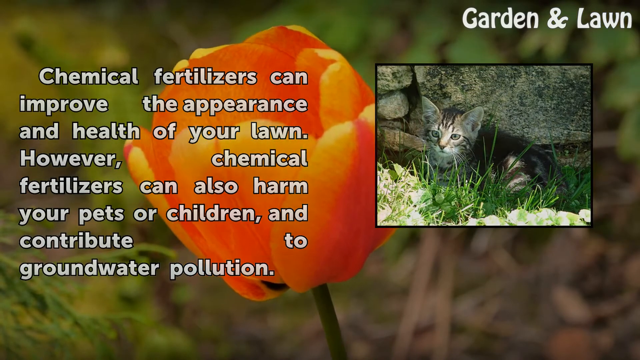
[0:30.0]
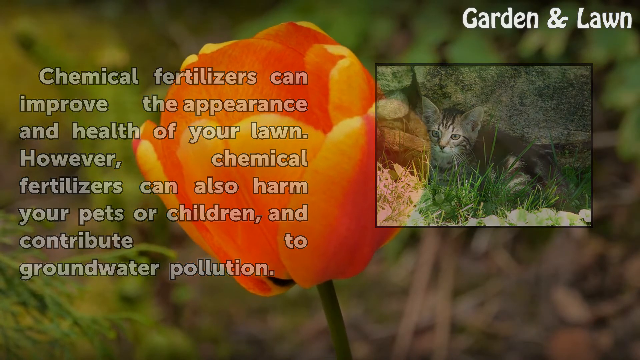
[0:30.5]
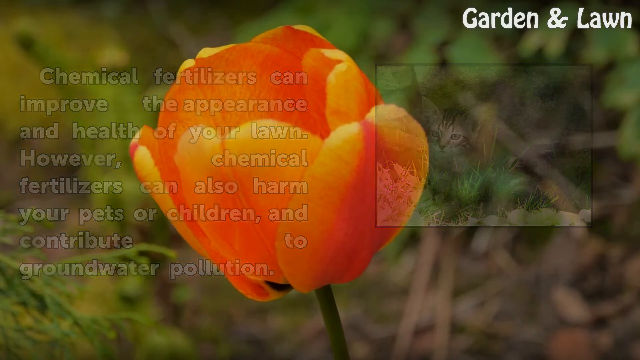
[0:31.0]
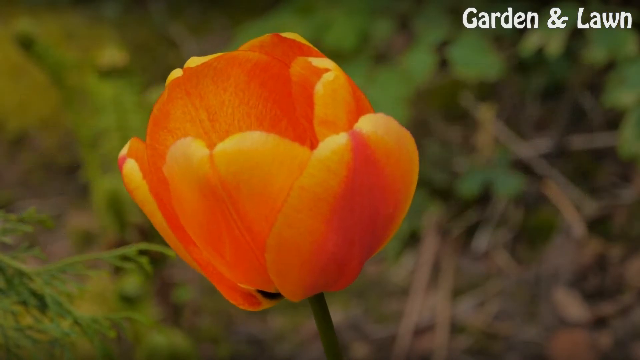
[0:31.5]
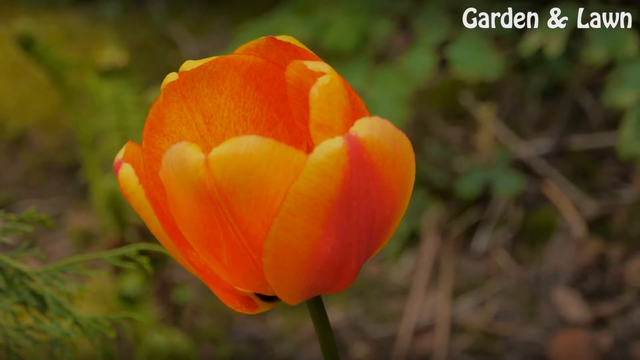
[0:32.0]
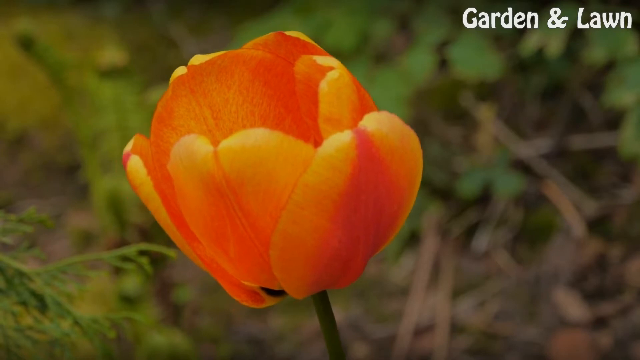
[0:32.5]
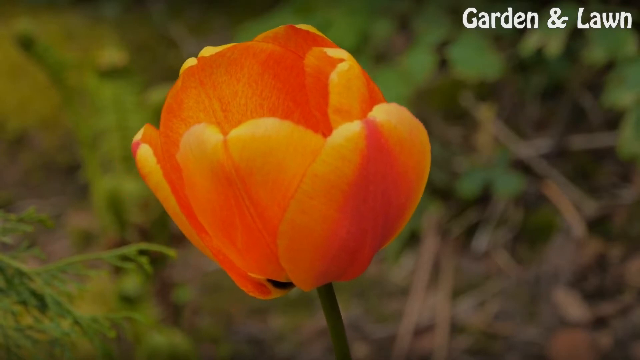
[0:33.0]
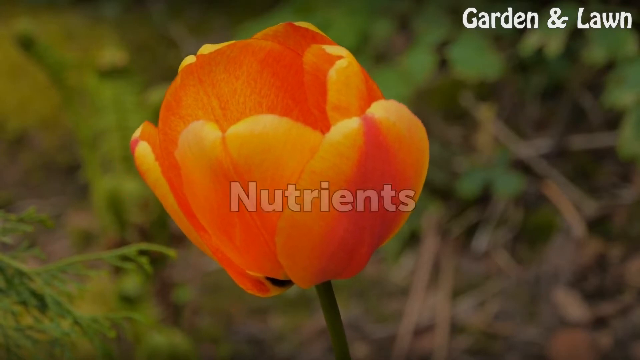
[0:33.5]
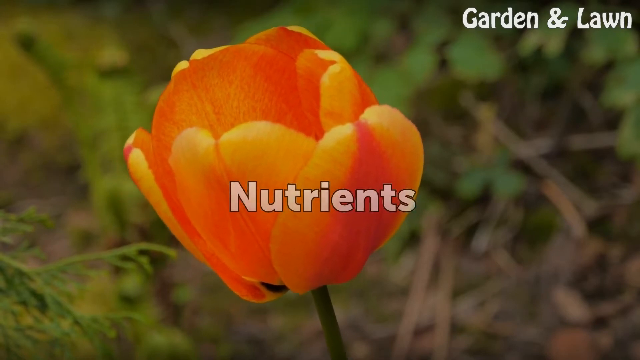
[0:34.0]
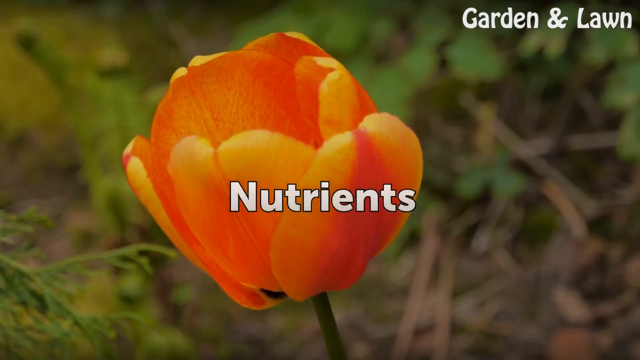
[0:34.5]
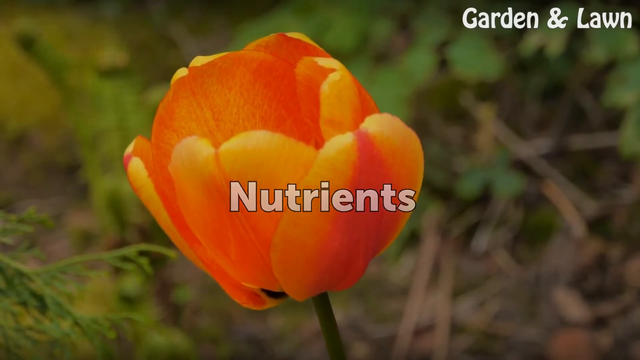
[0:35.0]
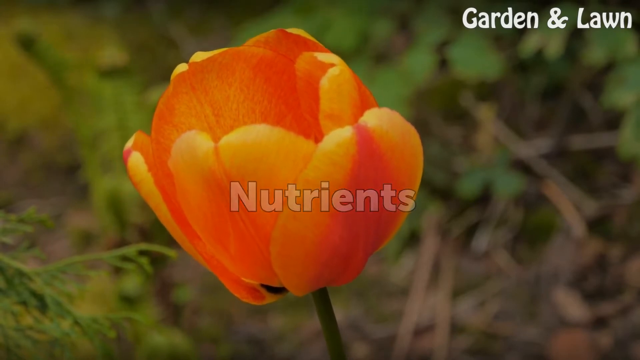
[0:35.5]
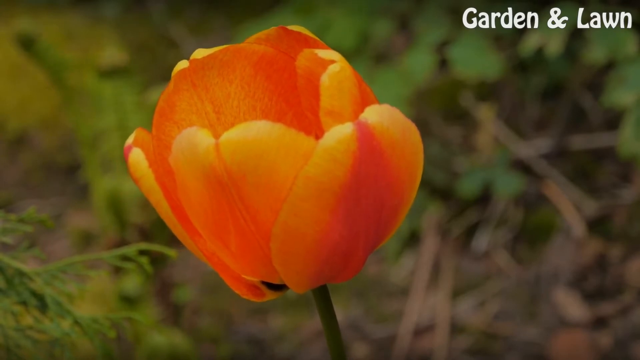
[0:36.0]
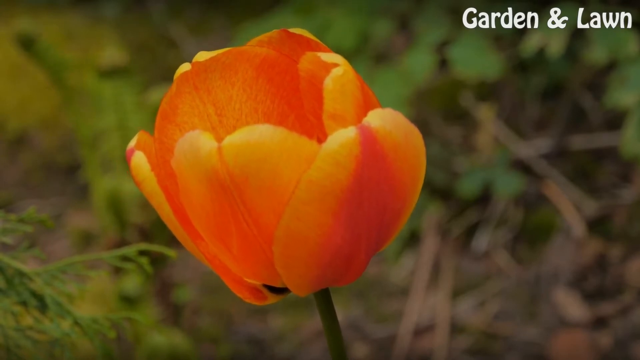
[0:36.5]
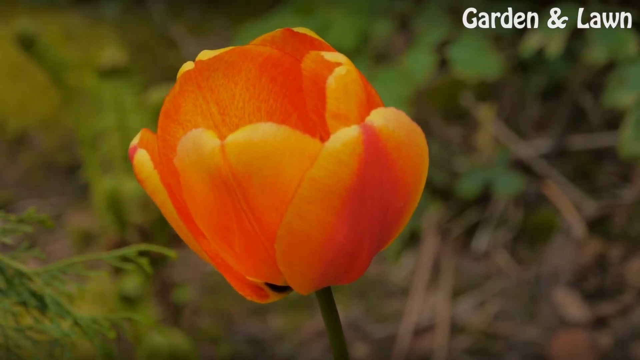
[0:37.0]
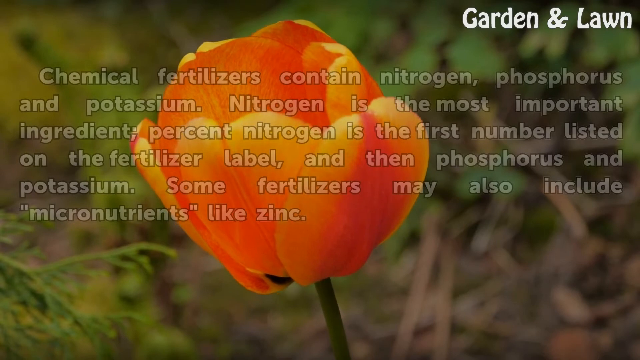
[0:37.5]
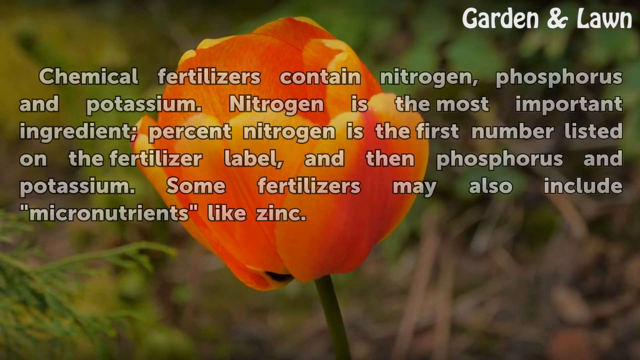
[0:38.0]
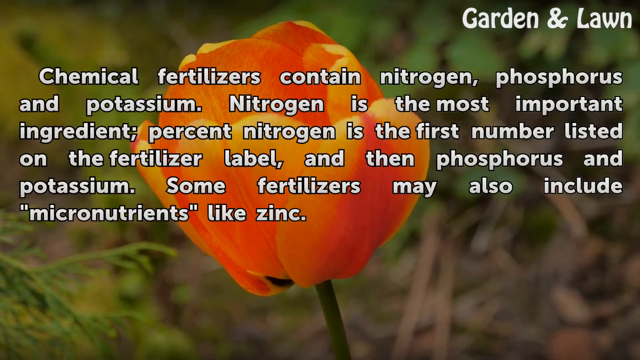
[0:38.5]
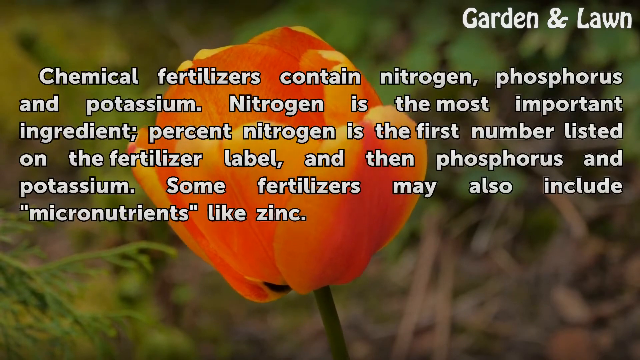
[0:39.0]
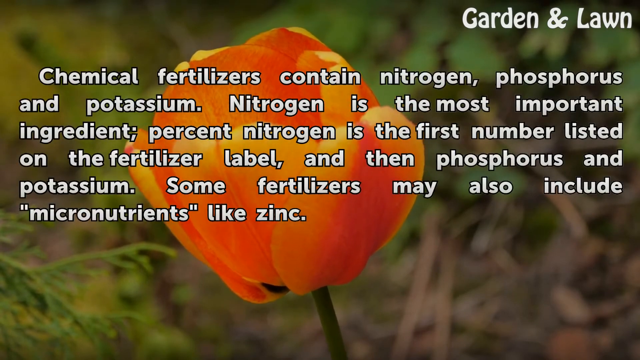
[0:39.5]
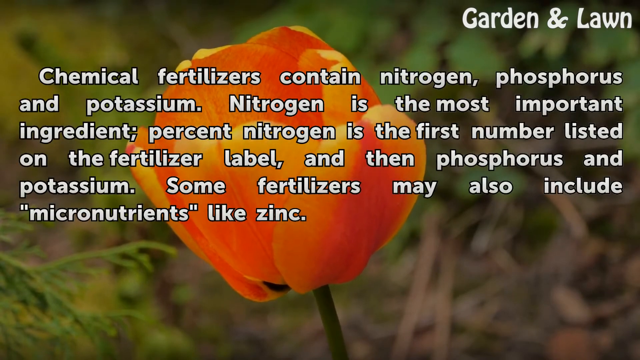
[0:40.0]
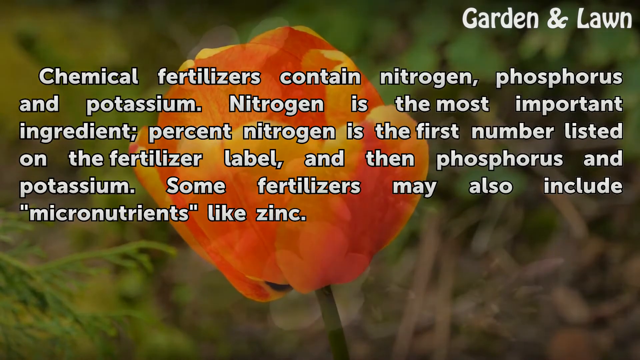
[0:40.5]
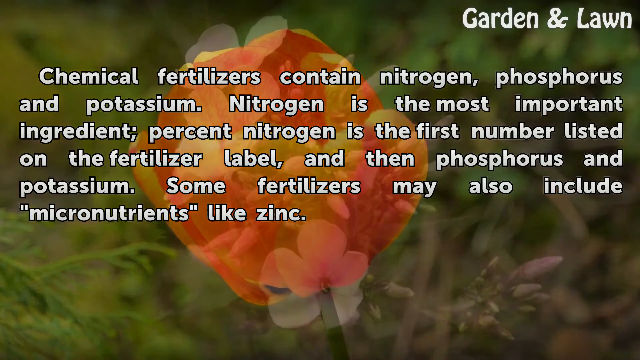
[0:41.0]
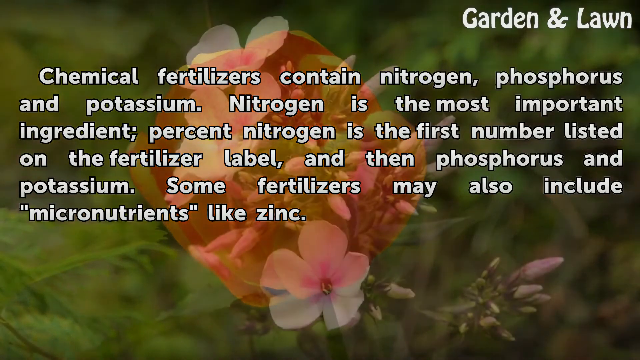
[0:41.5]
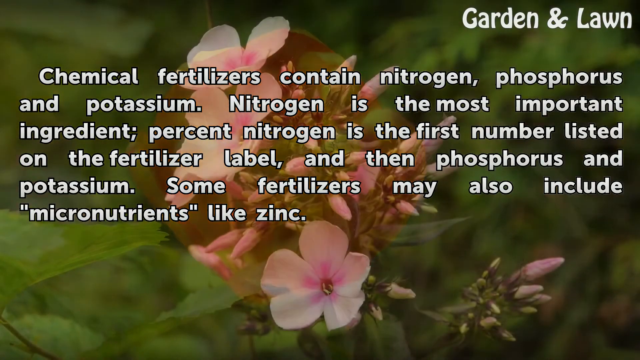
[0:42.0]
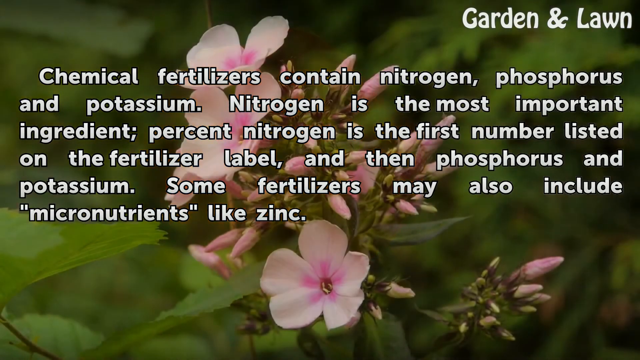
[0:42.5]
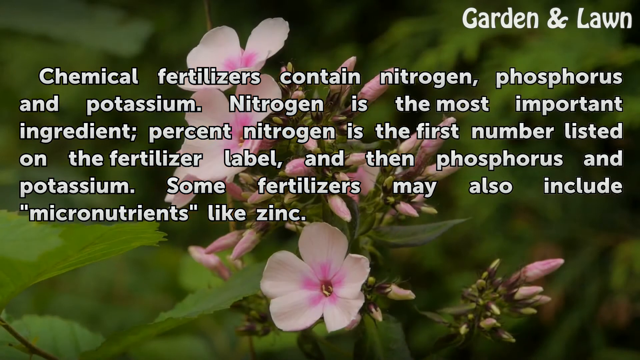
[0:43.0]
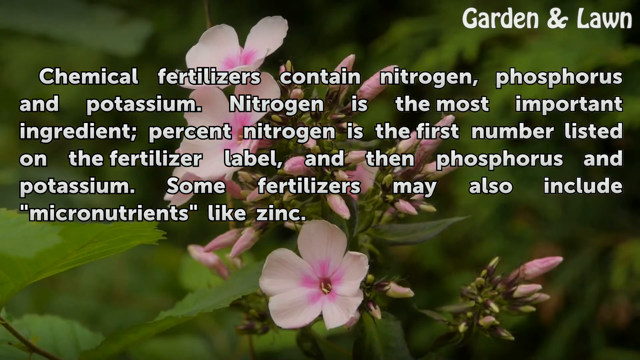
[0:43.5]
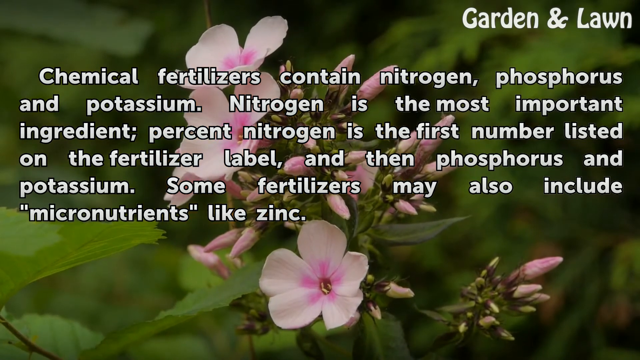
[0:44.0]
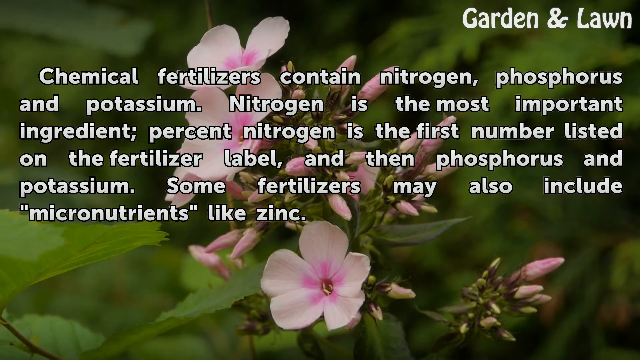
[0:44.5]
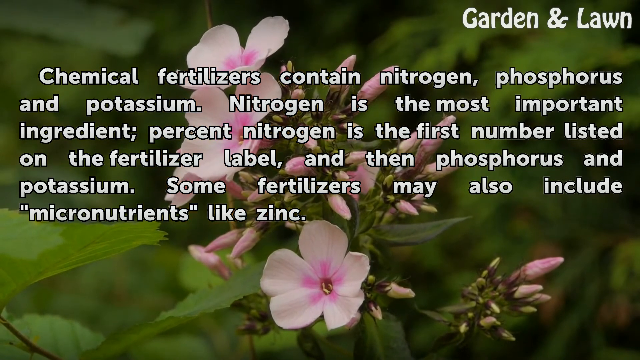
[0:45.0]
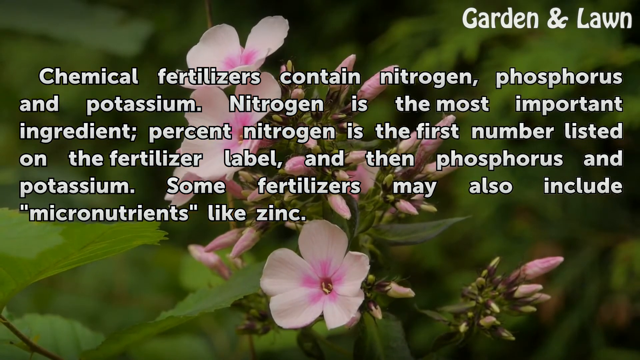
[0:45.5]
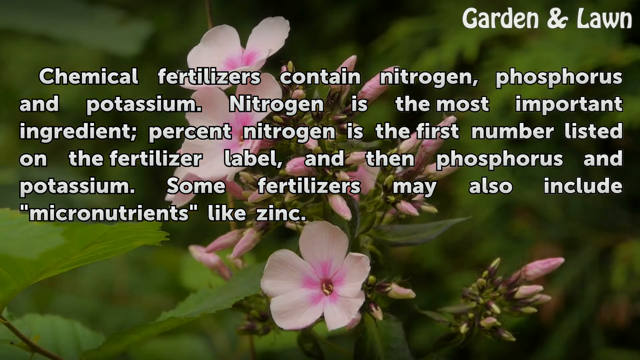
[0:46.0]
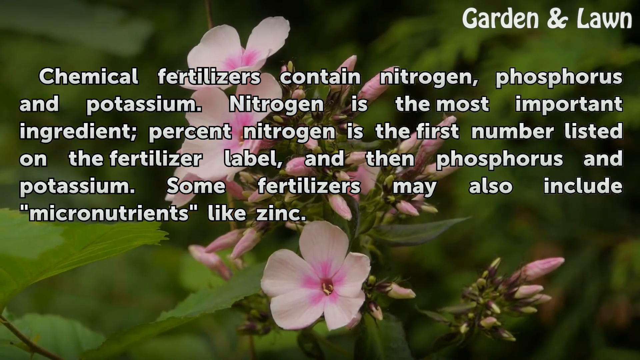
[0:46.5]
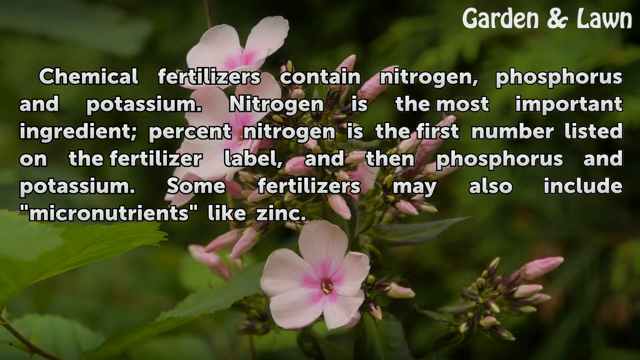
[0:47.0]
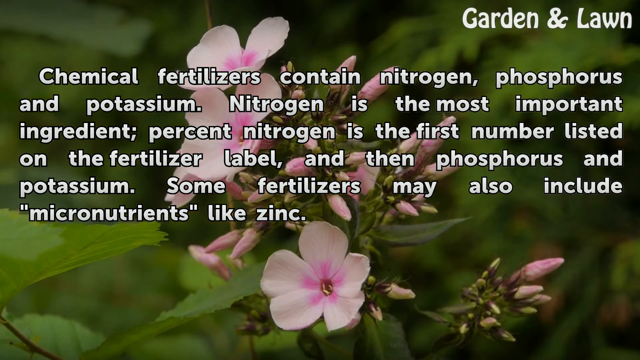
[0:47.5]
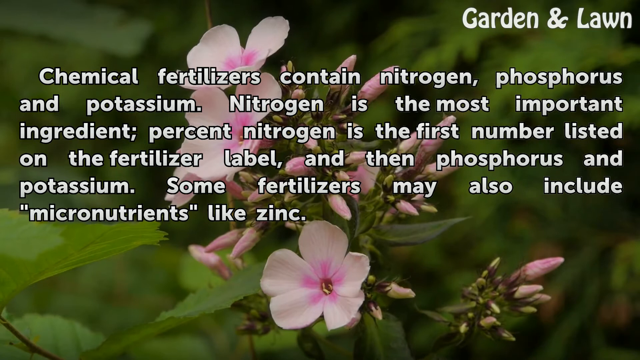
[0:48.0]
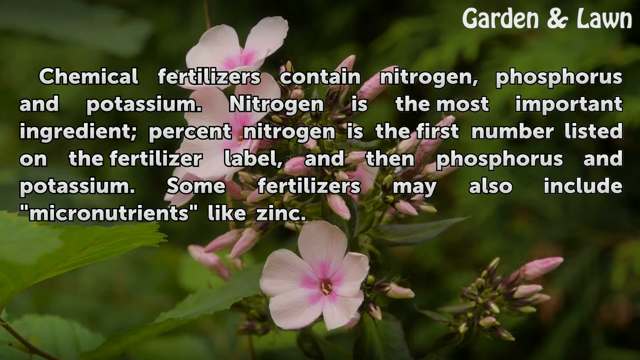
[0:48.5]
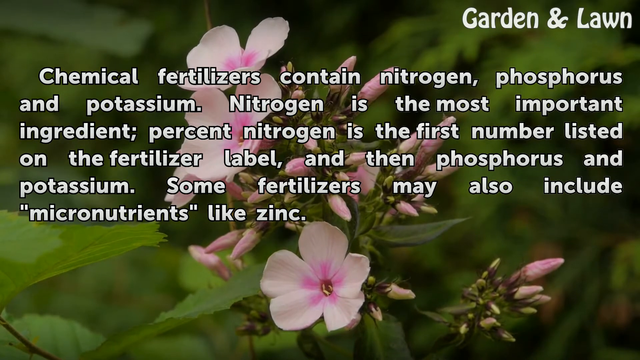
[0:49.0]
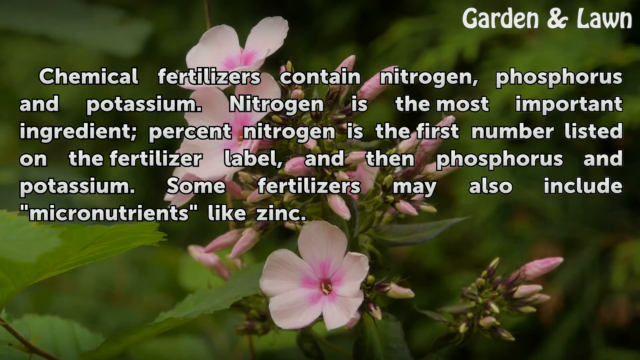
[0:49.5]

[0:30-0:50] A single orangey yellow flower with petals is shown, and text in the centre of the screen reads "nutrients". This transitions into a paragraph of white text with a black outline reading "chemical fertilisers contain nitrogen, phosphorus and potassium. Nitrogen is the most important ingredient. Percent nitrogen is the first number listed on the fertiliser label and then phosphorus and potassium. Some fertilisers may also include micronutrients like zinc." The background changes to three different flowers with about five white and pink petals. There are many little green stems and flower buds, about 20 to 30 in total, showing just the tips of unopened buds, which are green and some pinkish white. Around the flowers is a blurred green background of leaves.